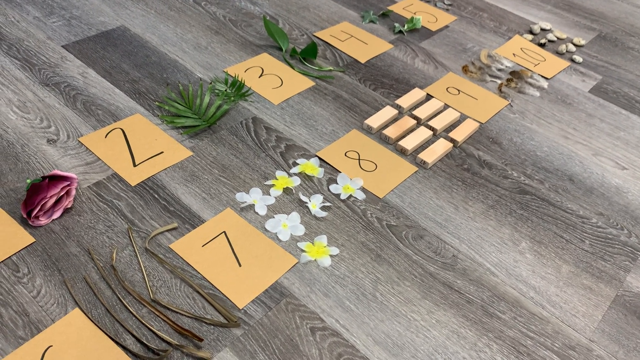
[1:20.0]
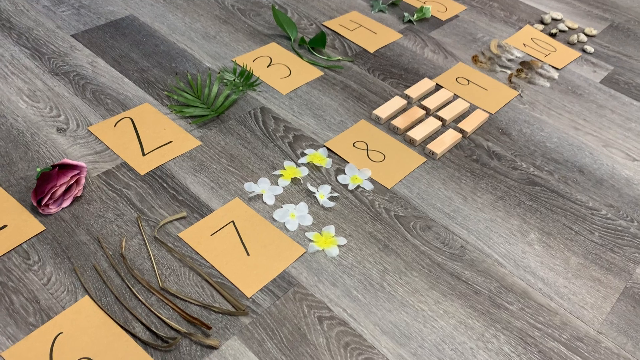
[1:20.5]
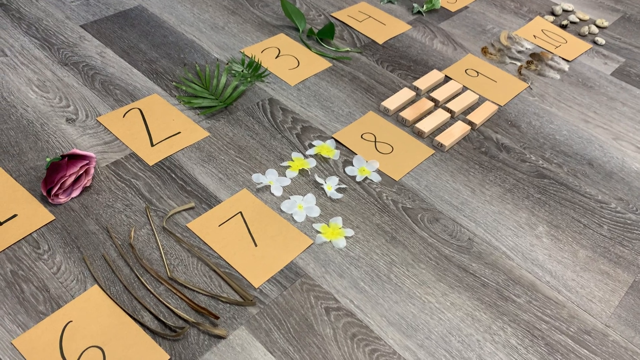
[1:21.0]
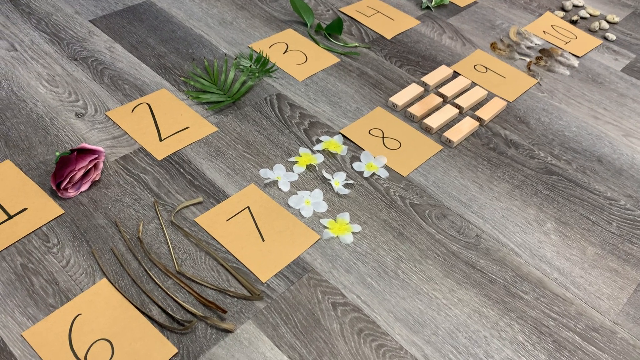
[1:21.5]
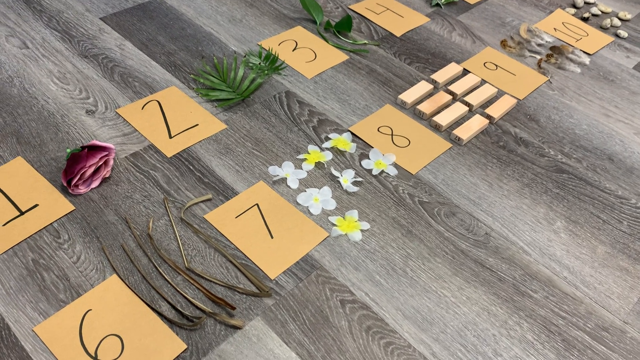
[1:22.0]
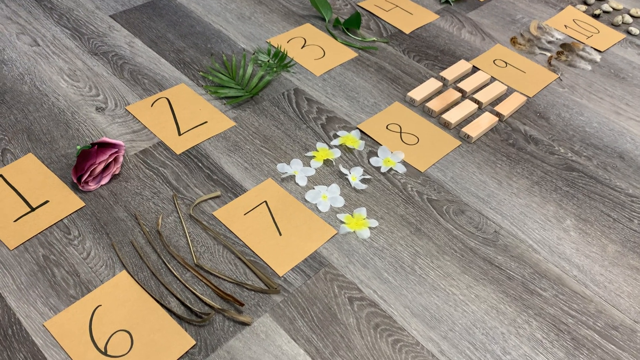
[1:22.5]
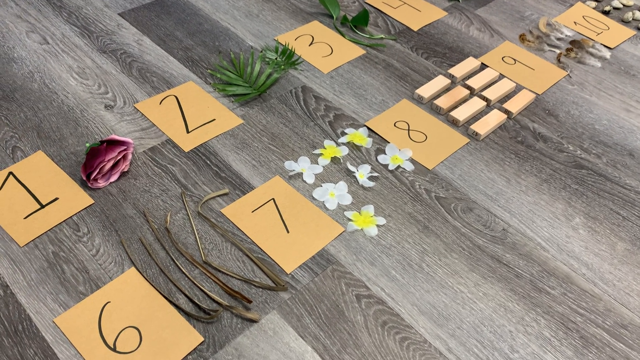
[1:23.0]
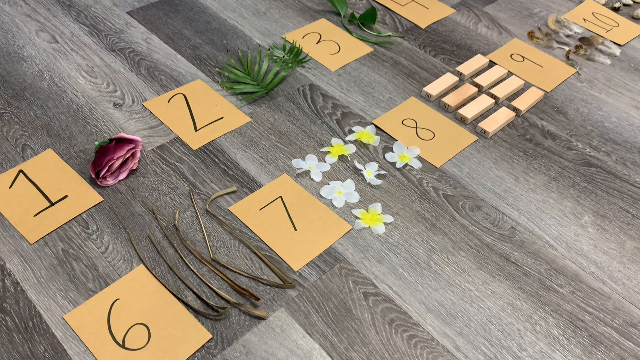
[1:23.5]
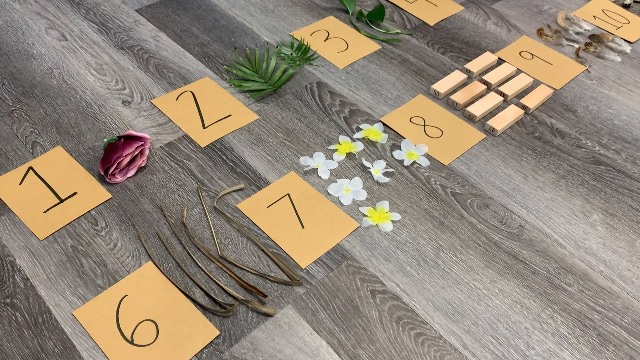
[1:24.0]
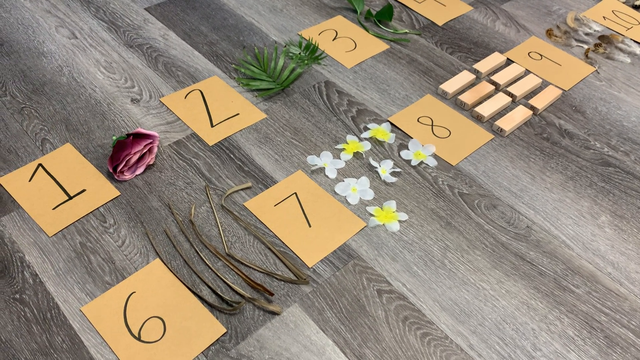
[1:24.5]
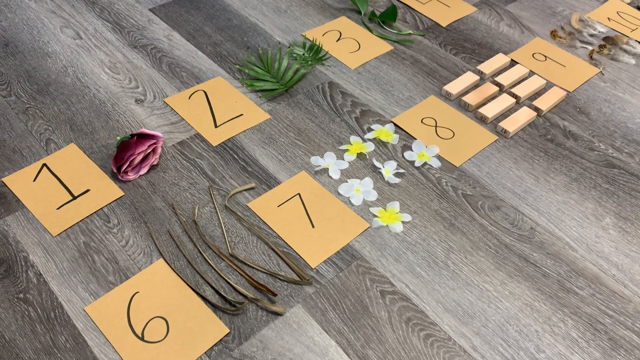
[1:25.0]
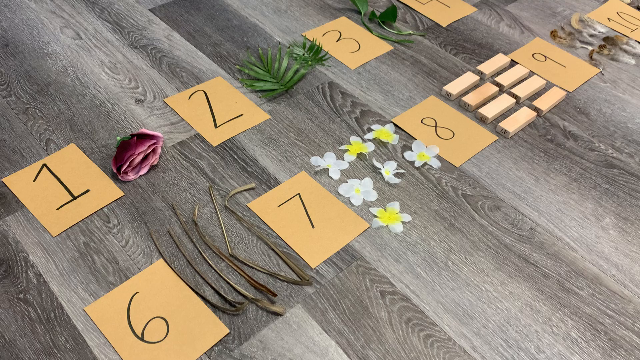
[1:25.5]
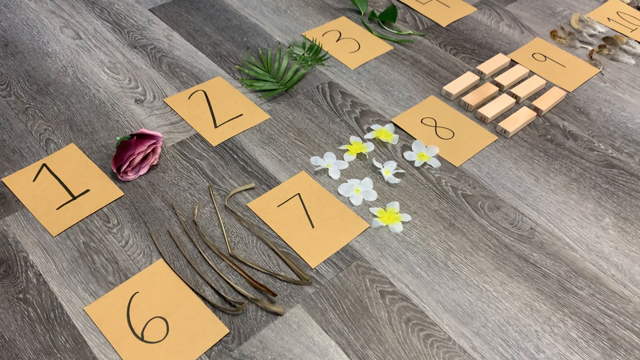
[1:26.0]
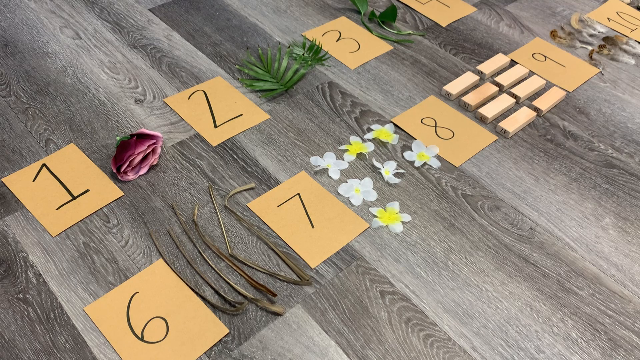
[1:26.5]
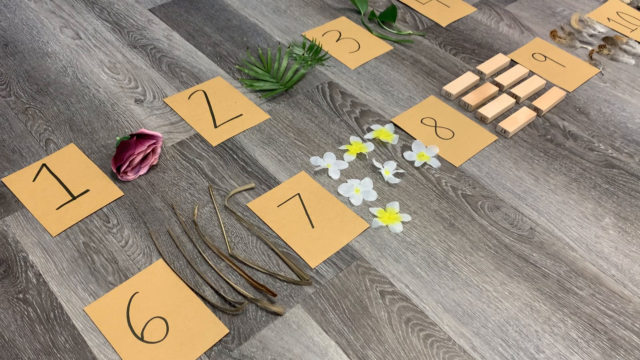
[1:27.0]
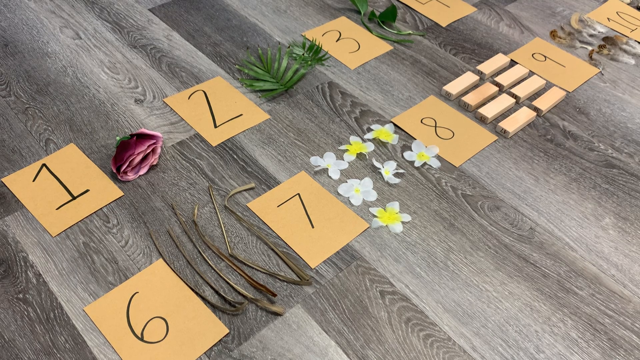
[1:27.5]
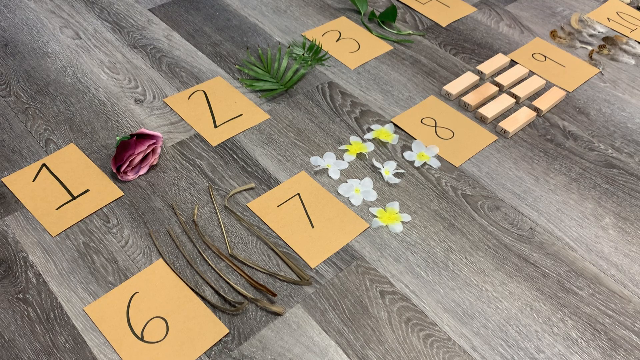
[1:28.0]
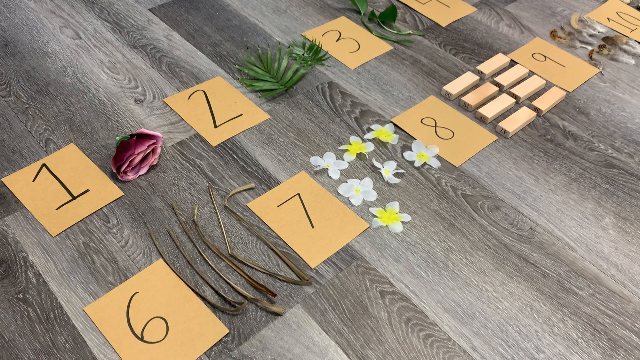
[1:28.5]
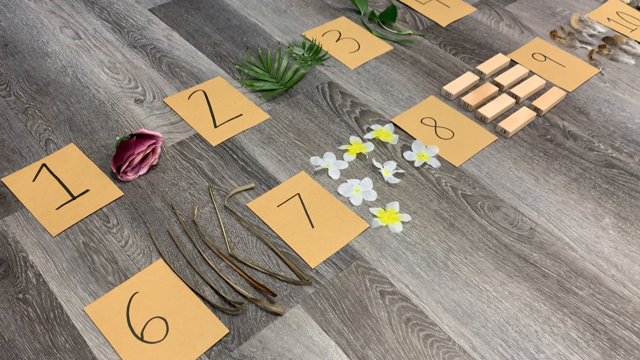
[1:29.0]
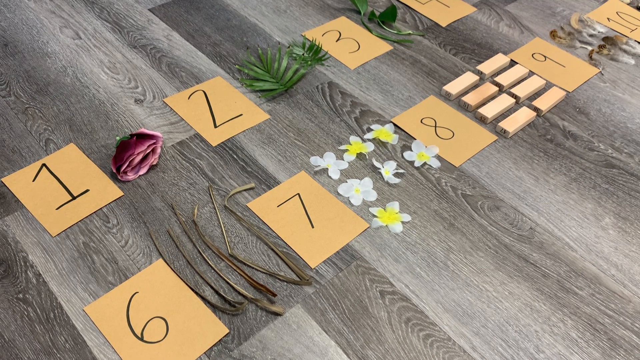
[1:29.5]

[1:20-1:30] The camera pans left, moving from the view of cards 5 and 10 back towards the original frame, where cards 1, 2, 3, 6, 7, 8 and 9 are visible along with a little bit of card 10. No hand appears; there is only camera movement and everything else is still.